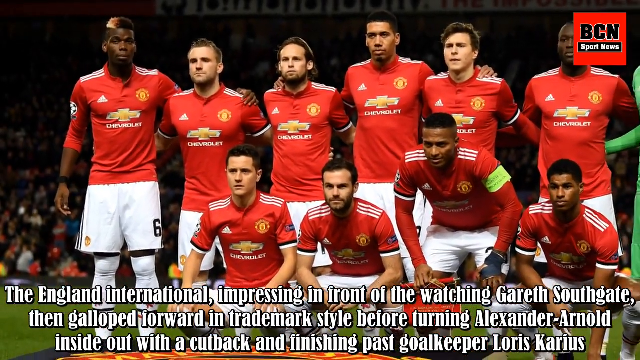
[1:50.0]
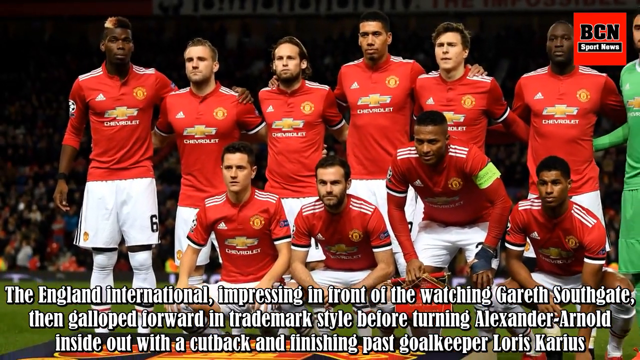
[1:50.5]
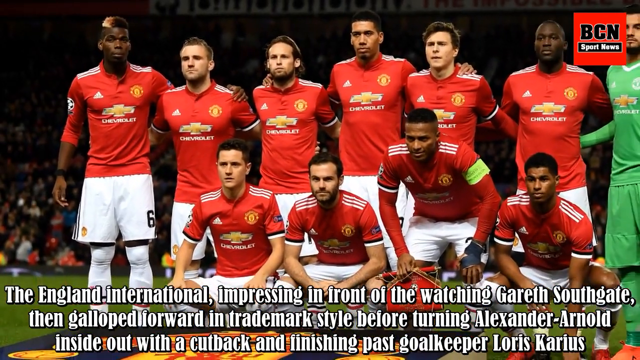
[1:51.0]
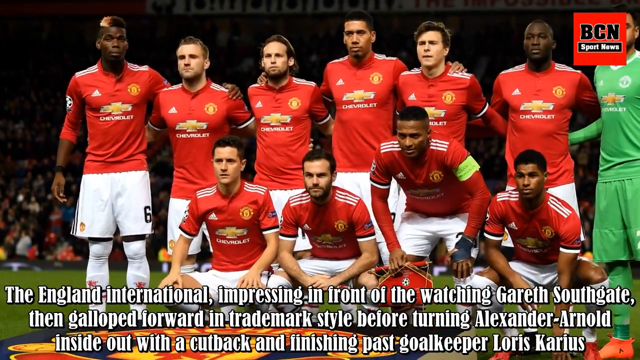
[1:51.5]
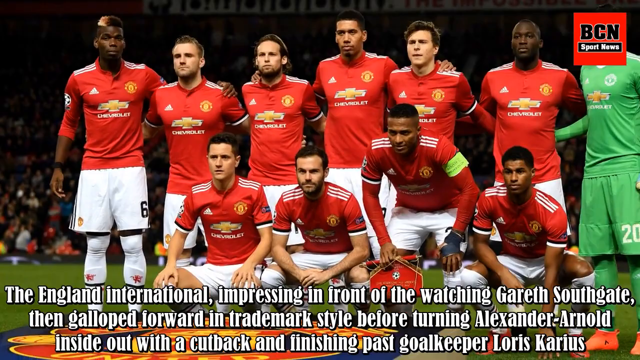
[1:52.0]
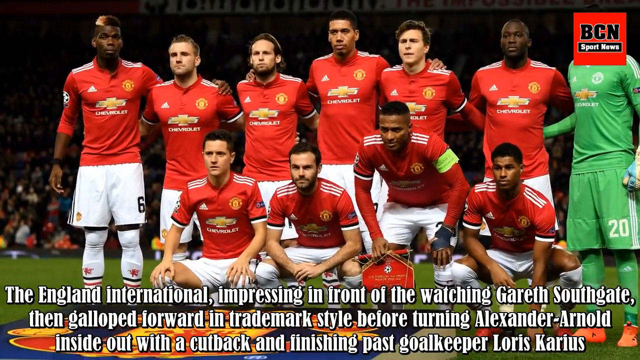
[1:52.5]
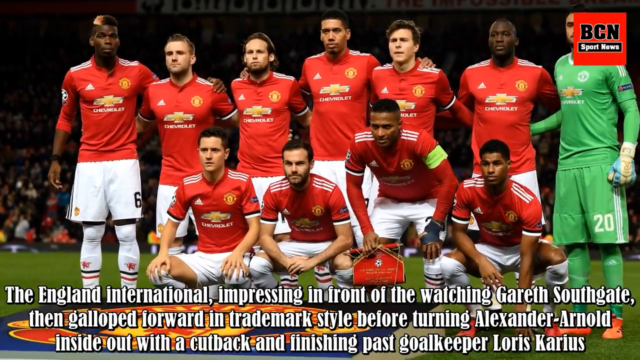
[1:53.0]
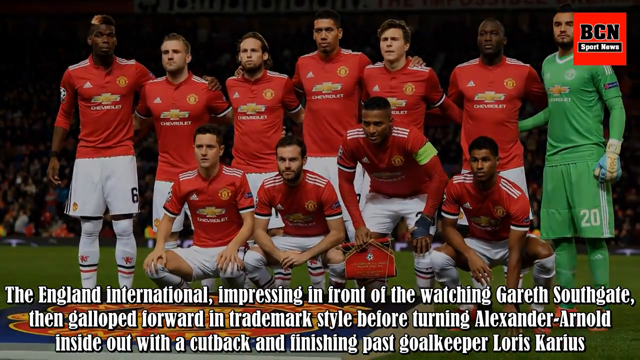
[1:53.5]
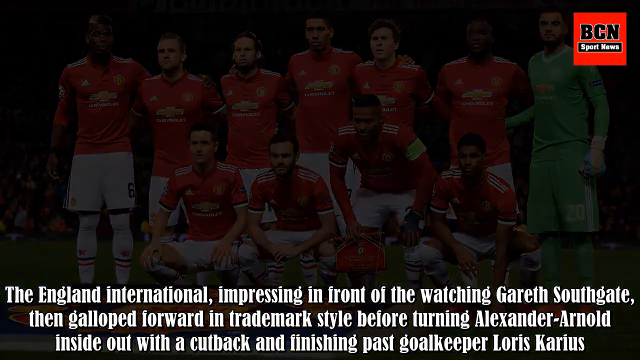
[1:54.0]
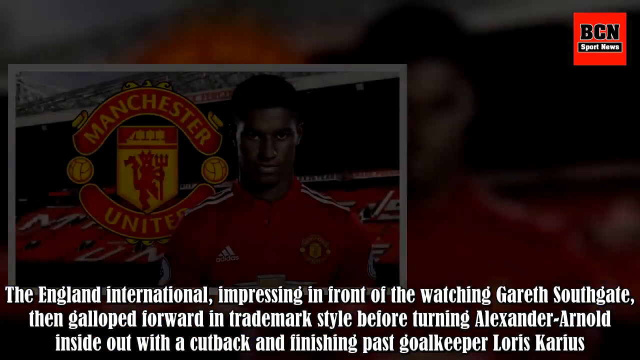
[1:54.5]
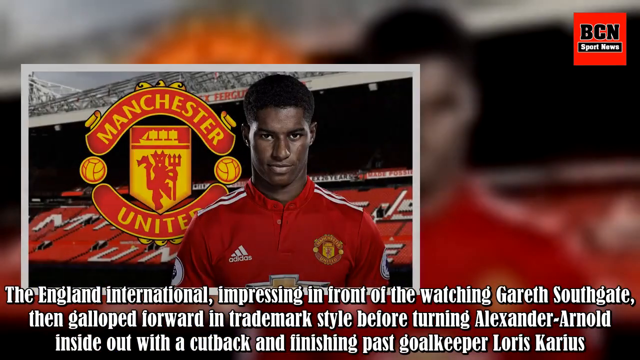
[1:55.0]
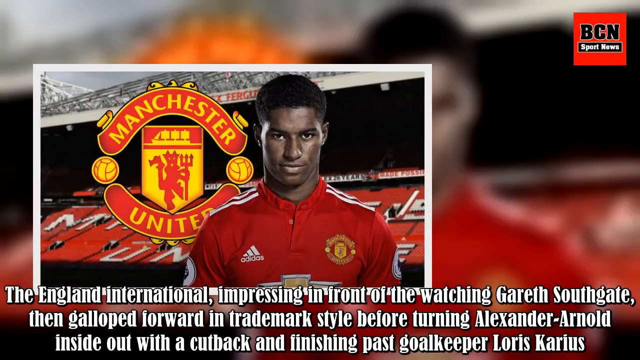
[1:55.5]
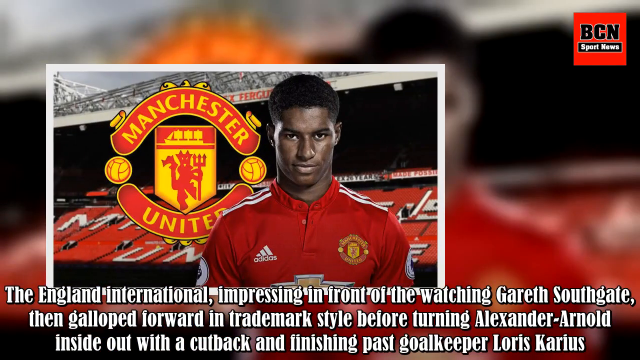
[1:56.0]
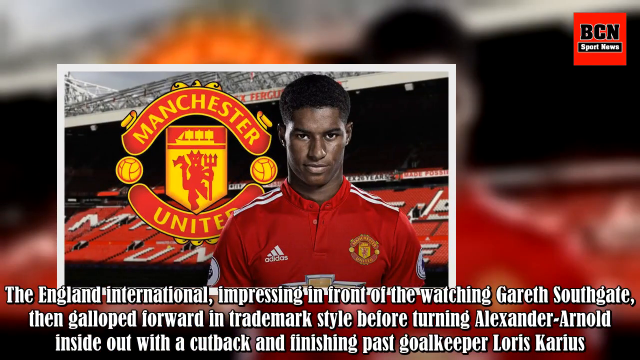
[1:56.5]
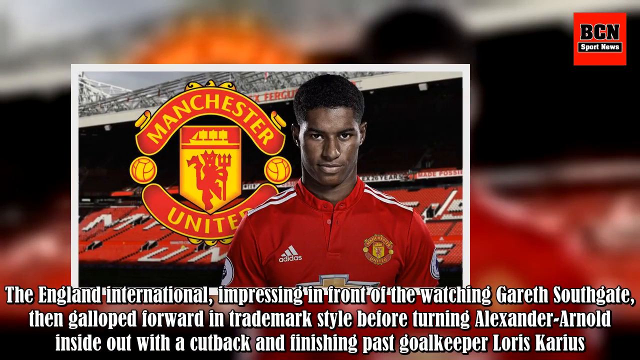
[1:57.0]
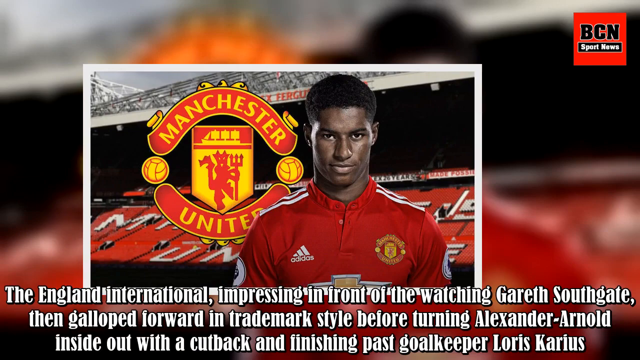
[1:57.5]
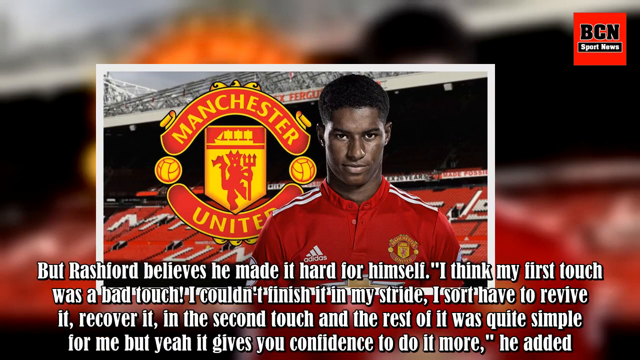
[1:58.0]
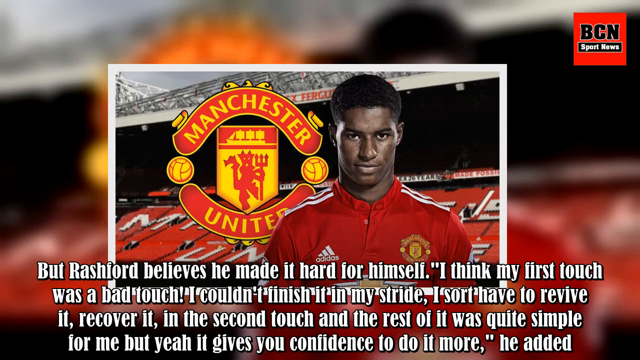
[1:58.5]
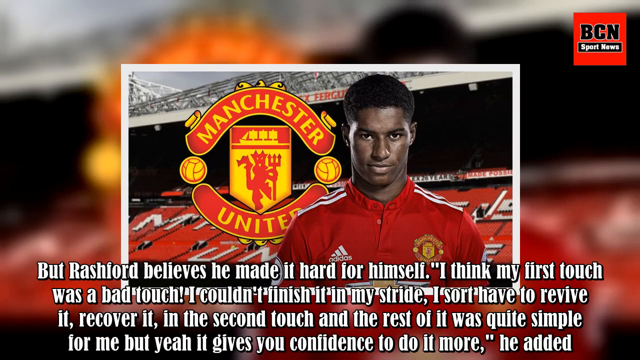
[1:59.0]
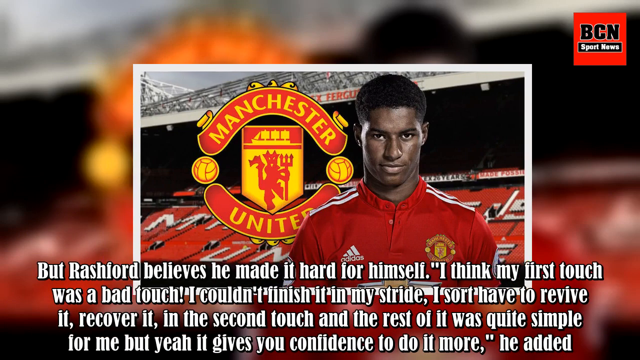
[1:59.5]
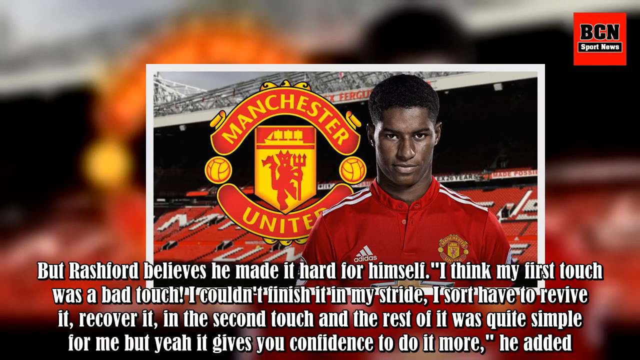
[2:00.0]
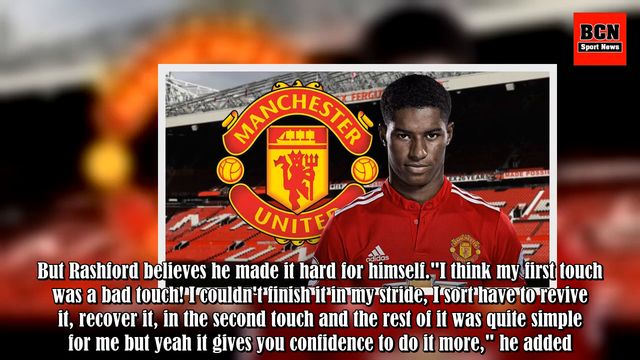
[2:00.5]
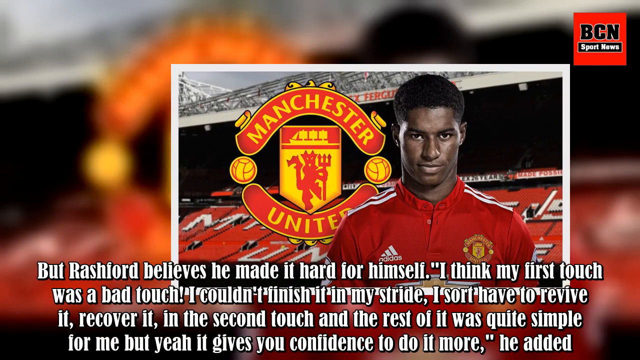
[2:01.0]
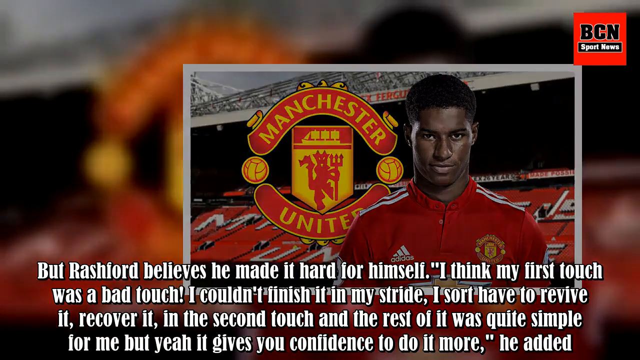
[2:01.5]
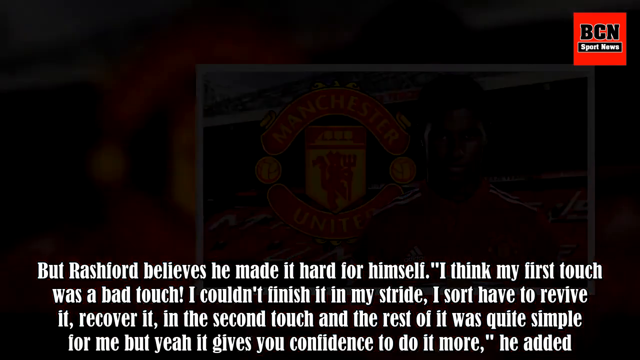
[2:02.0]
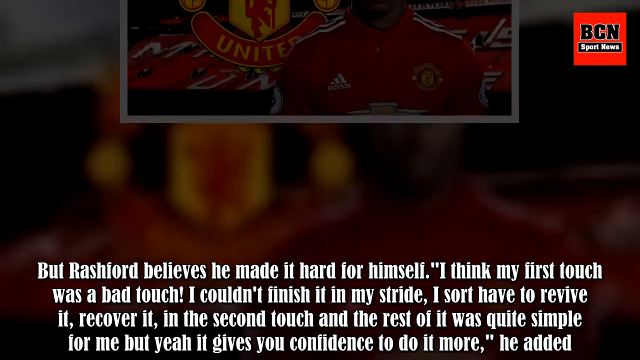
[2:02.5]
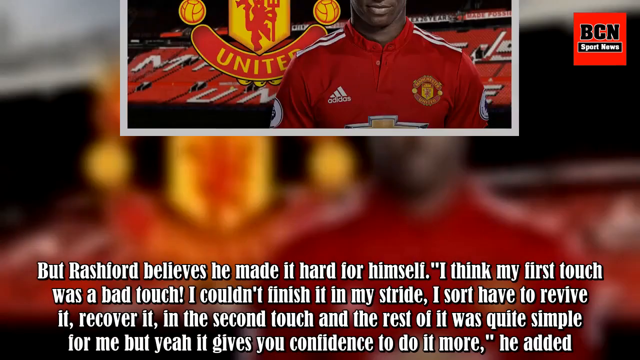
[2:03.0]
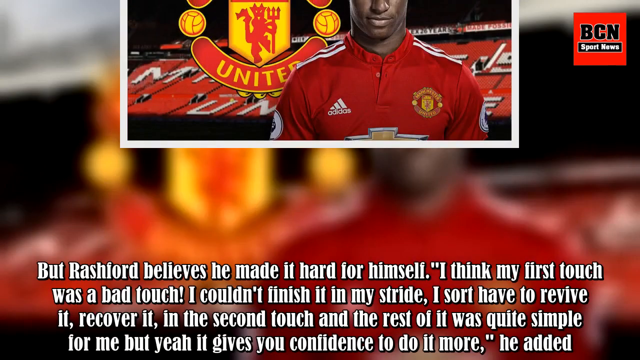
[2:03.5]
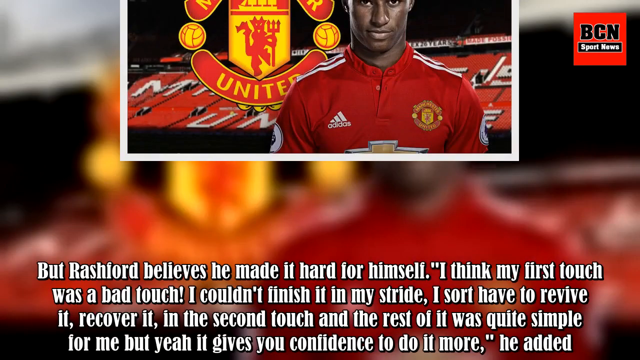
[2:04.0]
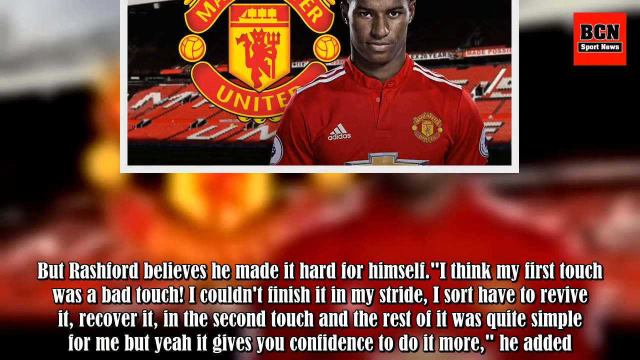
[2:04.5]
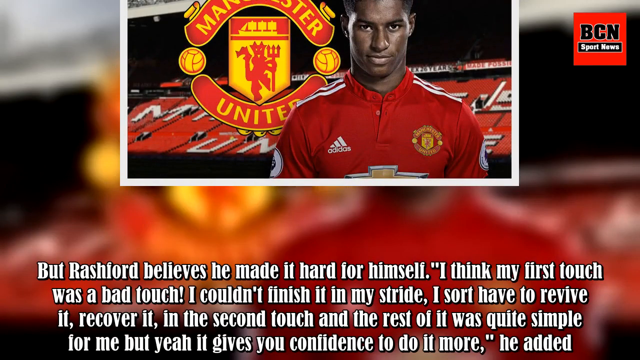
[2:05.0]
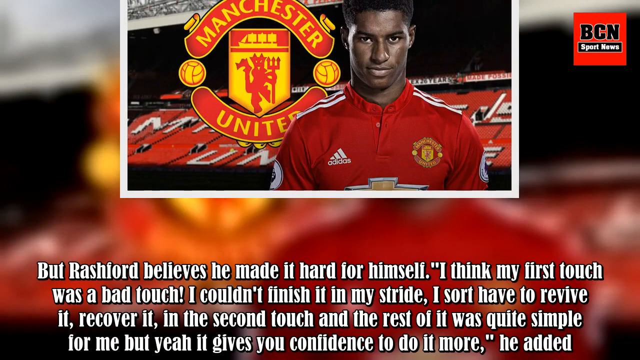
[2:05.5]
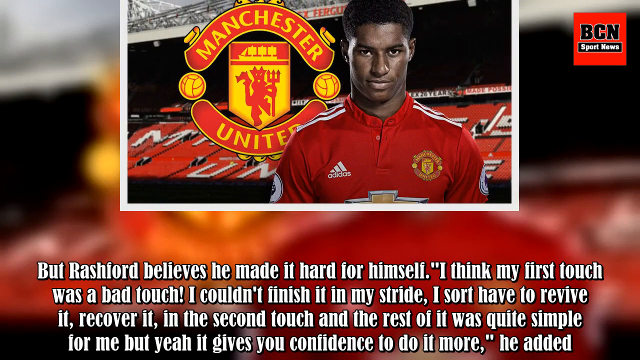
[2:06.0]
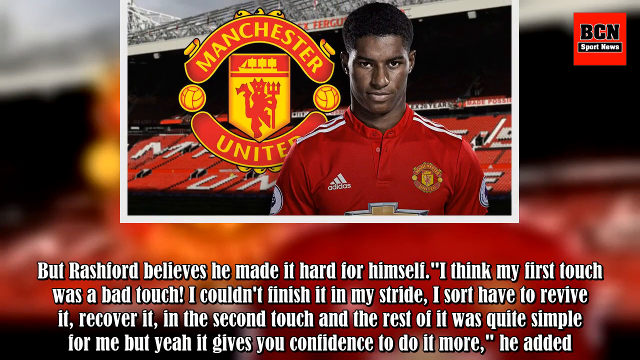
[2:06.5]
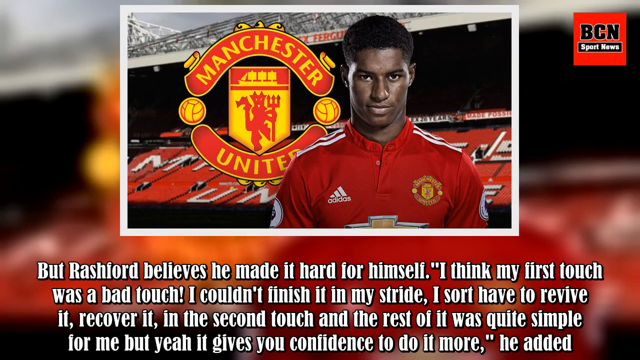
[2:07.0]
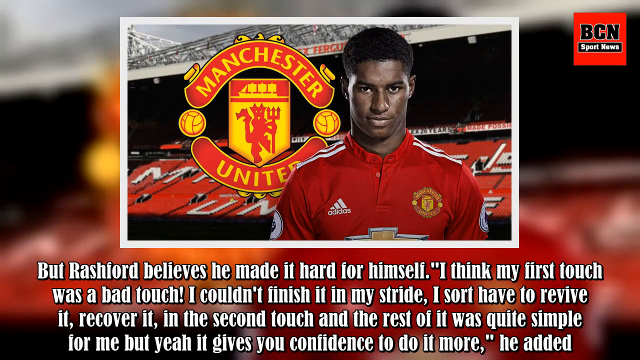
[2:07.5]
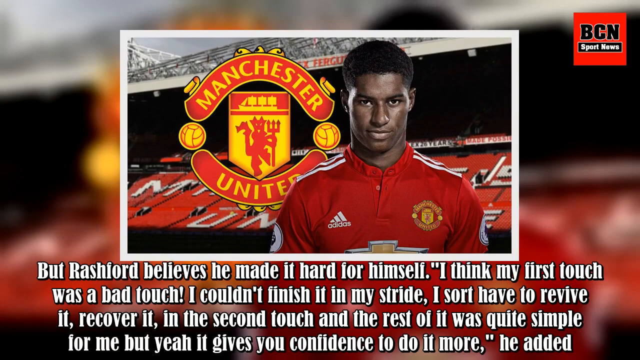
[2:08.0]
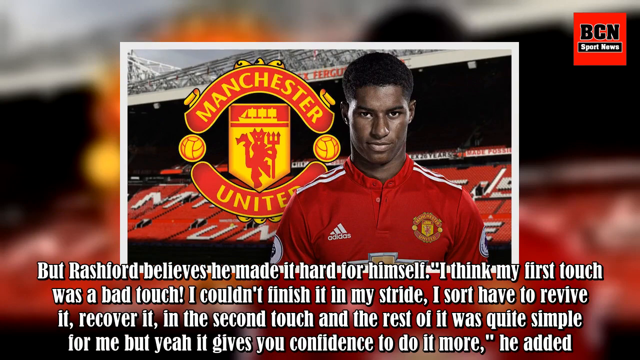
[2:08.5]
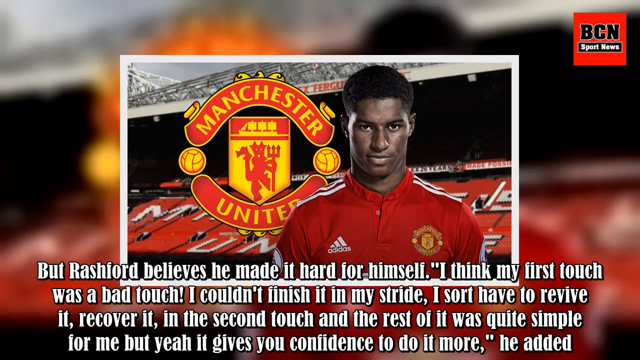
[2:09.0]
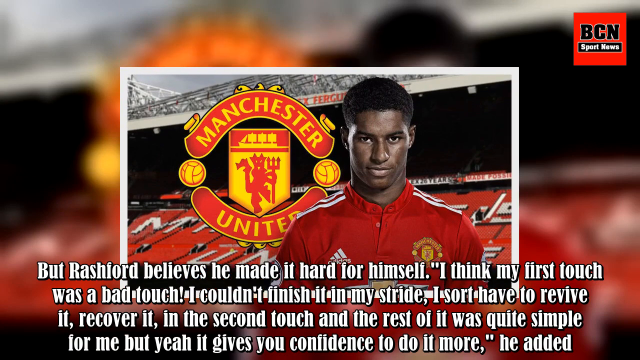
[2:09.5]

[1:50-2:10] The team is in a posing position, as if taking a team photo, with the individuals standing in the rear with their arms around each other. The photo pans out to catch all of them, the goalie included, showing their full bodies. Text reads "the England international impressing in front of the watching Gareth Southgate" and "gallop forward in trademark style before turning Alexander Arnold," and continues. The picture fades to a profile picture, apparently of Rashford, with a Manchester emblem: "Manchester" at the top, "United" at the bottom, a shield in the middle and a soccer ball on each side. The person wears the uniform with the Adidas logo on the right-hand side. The photo moves out to the right, then comes back down from the top toward the middle, showing the individual, with text about how Rashford believes he made it hard for himself: "I think my first touch was a bad touch." The text continues to the end of the paragraph.